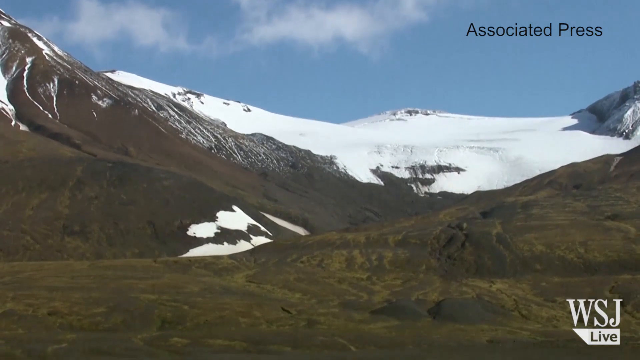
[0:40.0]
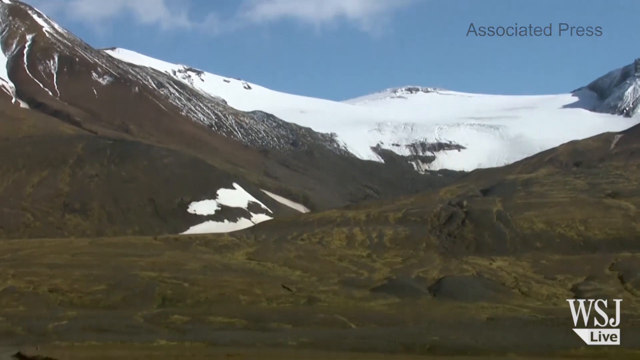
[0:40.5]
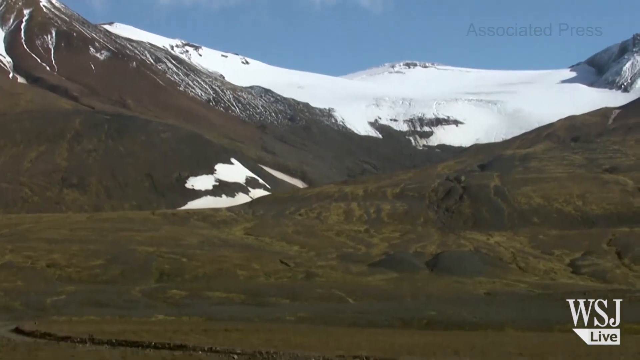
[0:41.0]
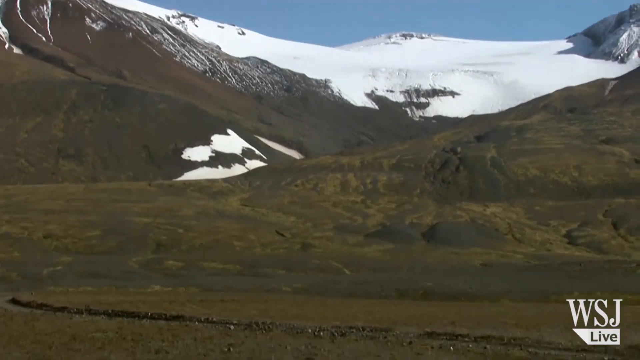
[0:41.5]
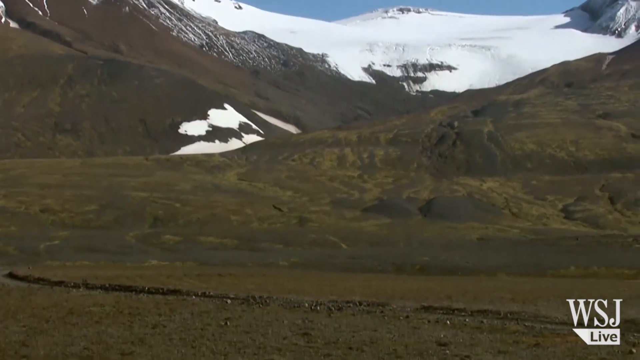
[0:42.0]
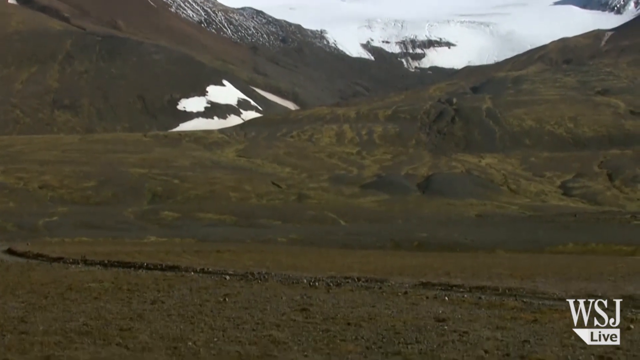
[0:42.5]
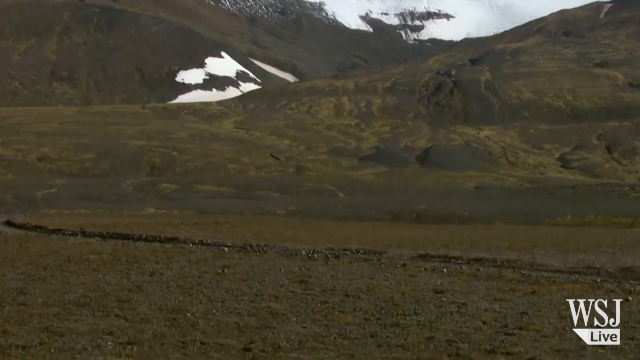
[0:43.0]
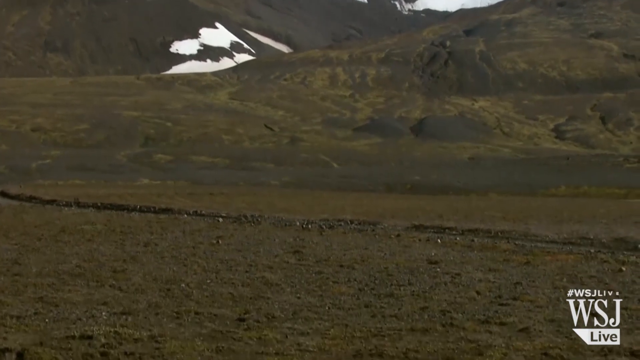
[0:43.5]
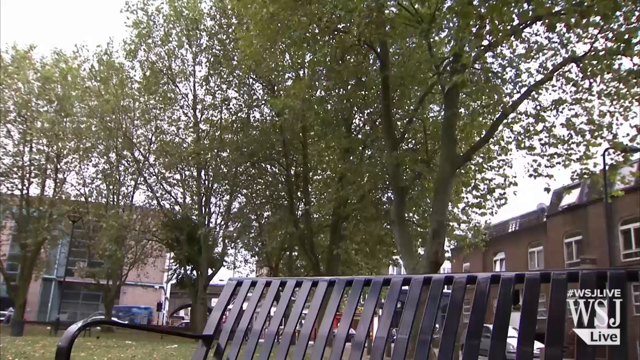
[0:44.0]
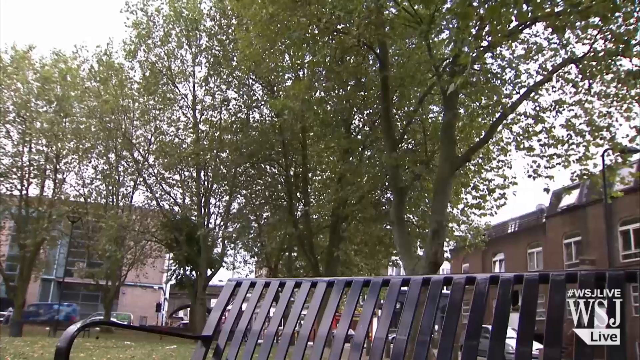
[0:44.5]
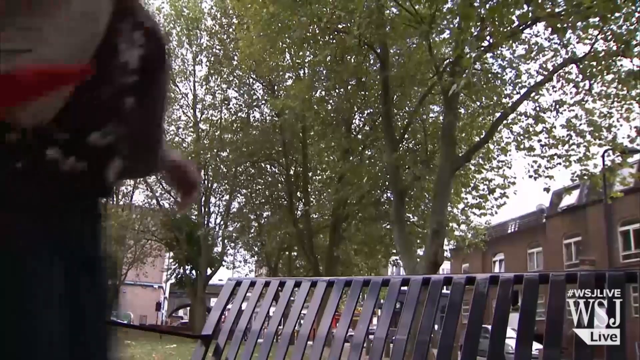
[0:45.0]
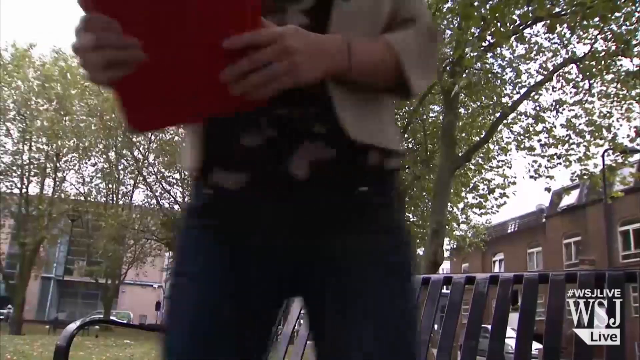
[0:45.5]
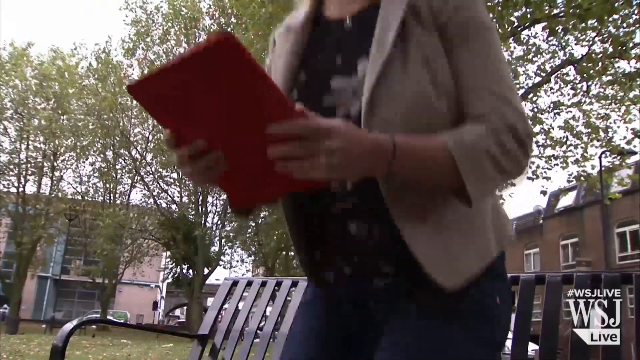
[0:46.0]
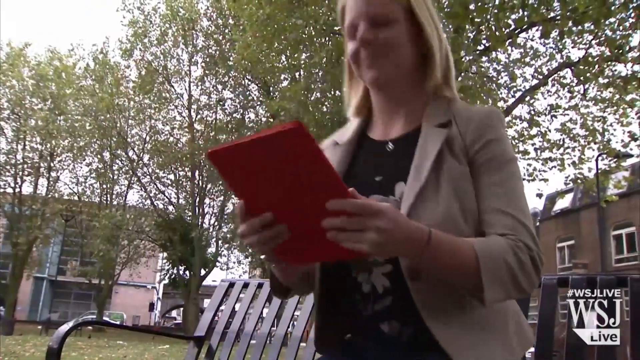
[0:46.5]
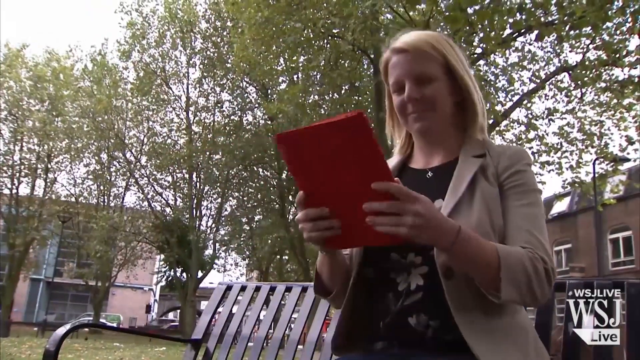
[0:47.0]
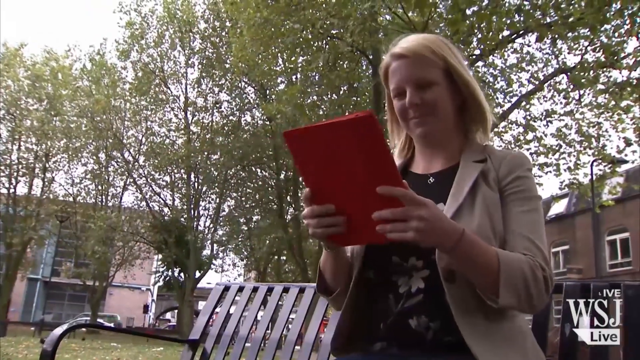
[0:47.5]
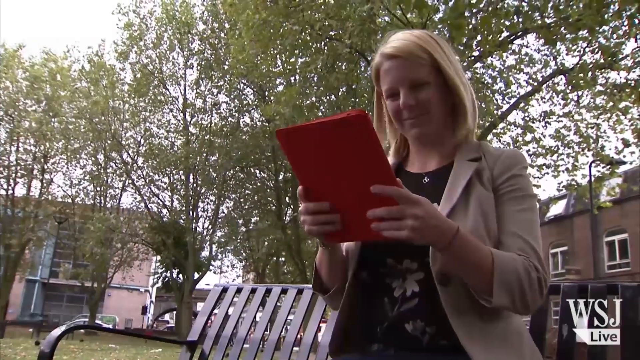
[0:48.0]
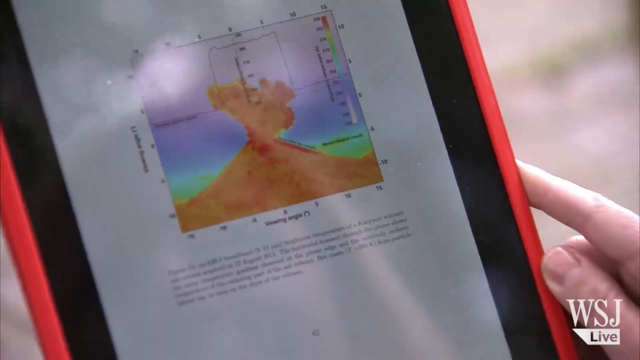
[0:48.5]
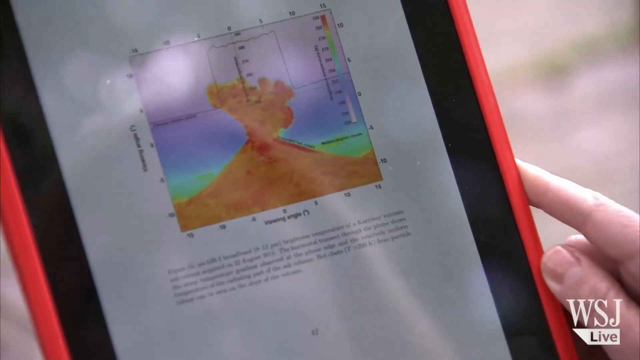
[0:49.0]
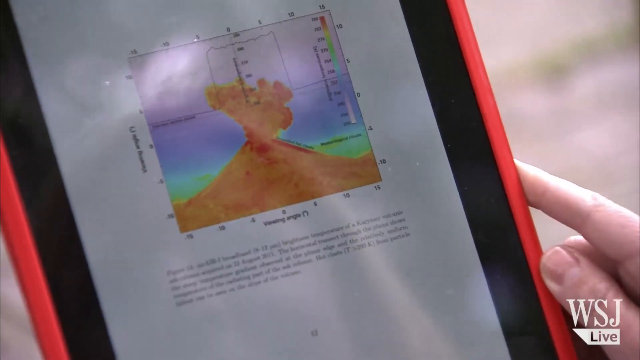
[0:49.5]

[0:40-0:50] The outdoor mountainscape continues, with a large mountain on the left, some hills at the bottom right, and a lot of white snow on the portion of the mountain from the top middle toward the right. At the top right, black text reads "Associated Press." Above the mountain is a blue daytime sky with some light clouds at the top left. The camera moves slowly downwards, showing more of the ground, which is a darker-toned greenish brown. The scene changes to a different location: a black bench in front, some trees behind it, and buildings with brown brick walls in the background on the right and middle left. A woman appears from the left and sits on the bench; she has white skin and blonde hair that seems to reach her shoulders. As she sits down, she holds up a red folder or book in her hands and looks down toward it. She wears a brown jacket with a black inner shirt. In the final shot, the view focuses on the iPad or book she has, which seems to show a square box with a volcano in the middle.